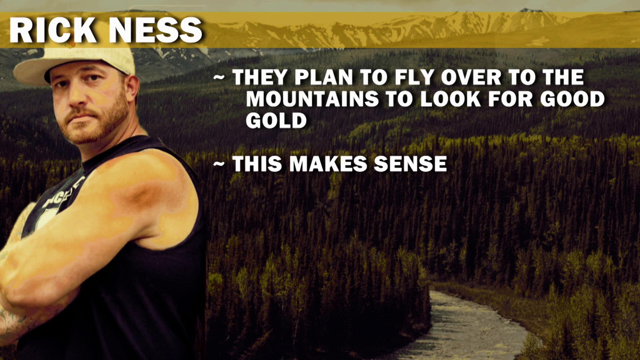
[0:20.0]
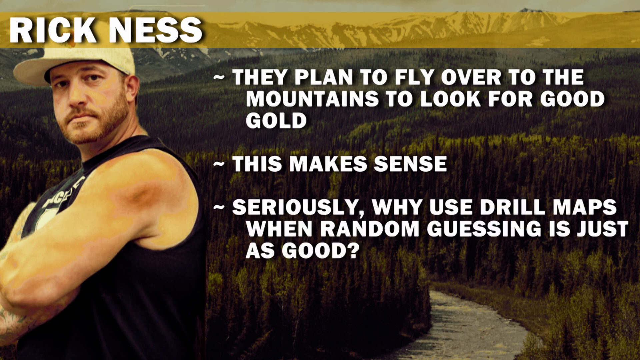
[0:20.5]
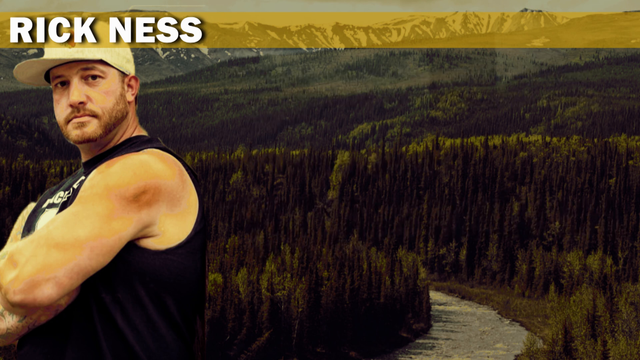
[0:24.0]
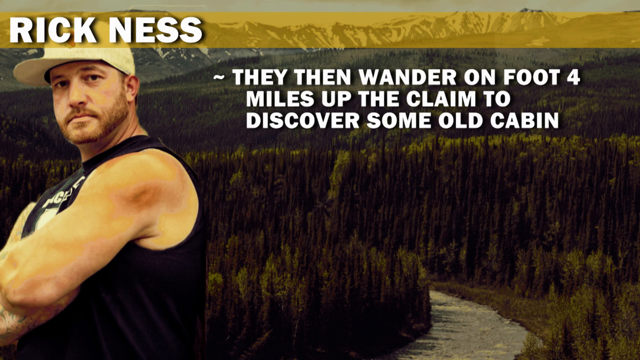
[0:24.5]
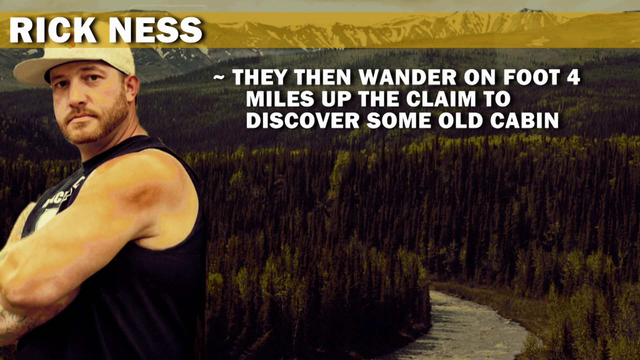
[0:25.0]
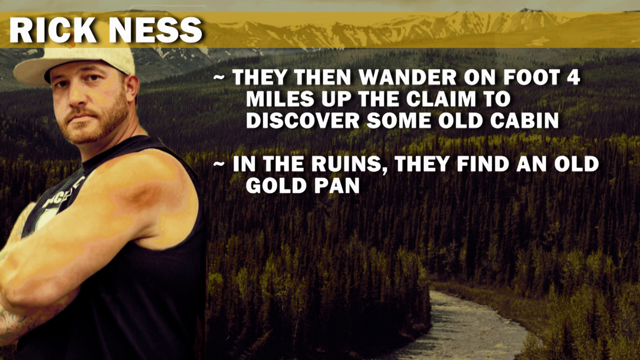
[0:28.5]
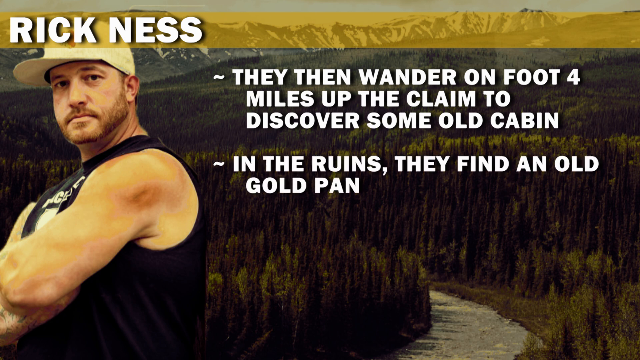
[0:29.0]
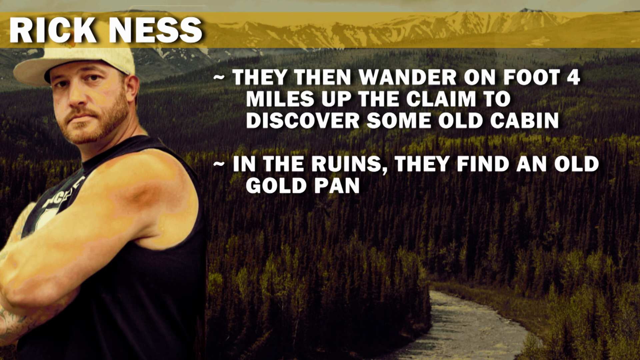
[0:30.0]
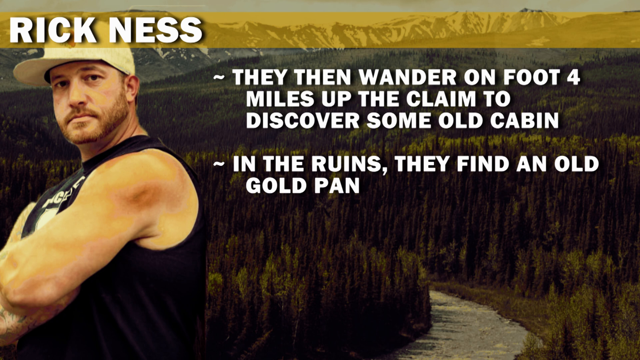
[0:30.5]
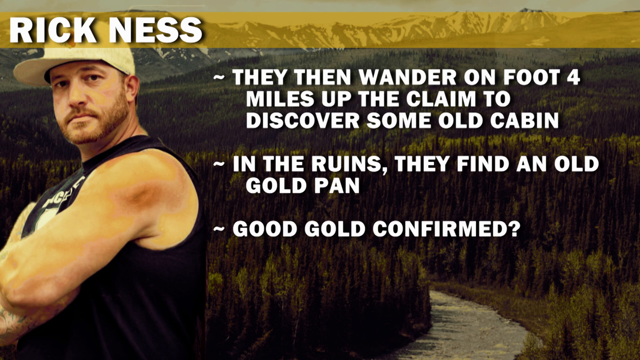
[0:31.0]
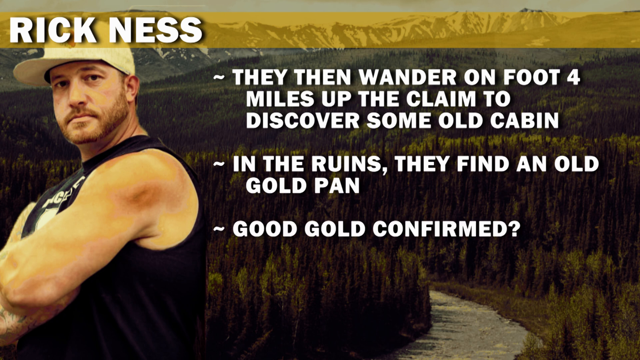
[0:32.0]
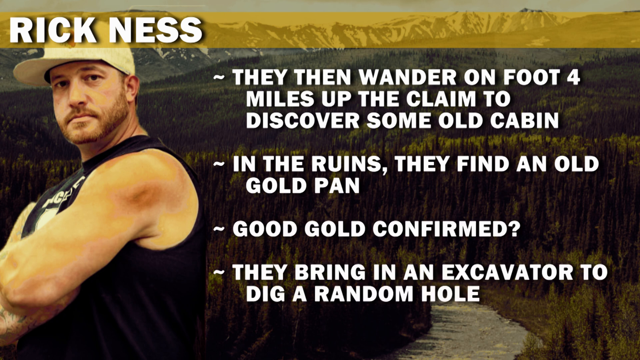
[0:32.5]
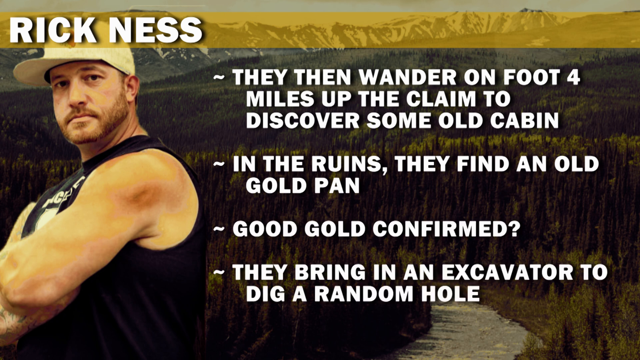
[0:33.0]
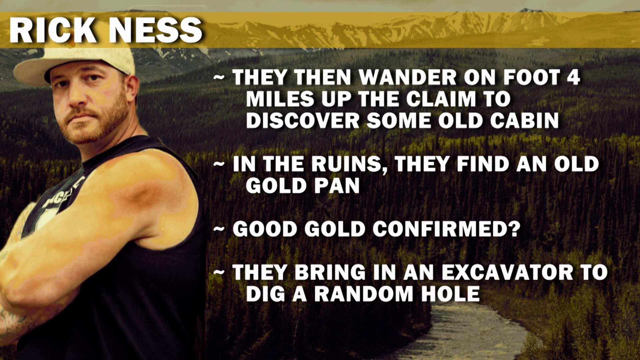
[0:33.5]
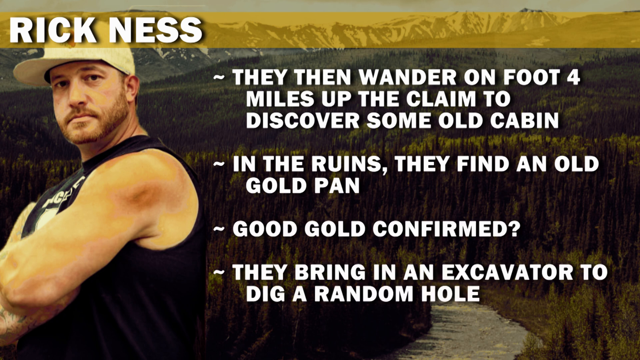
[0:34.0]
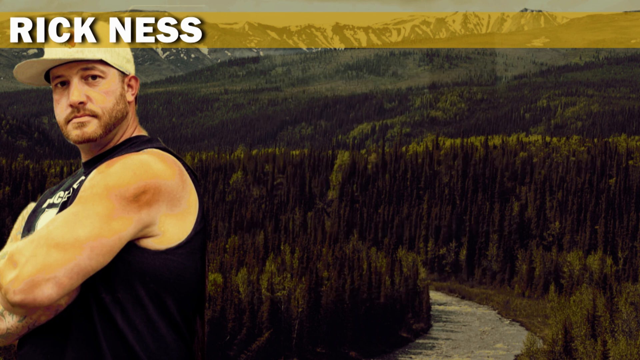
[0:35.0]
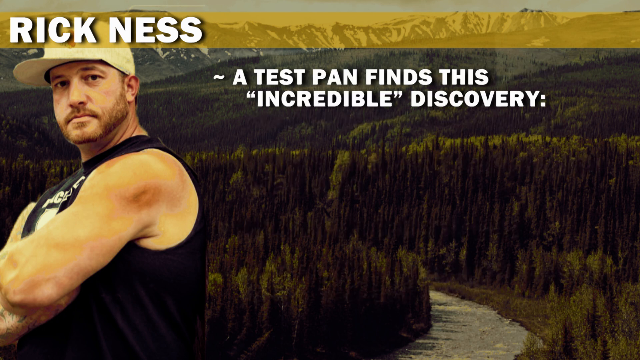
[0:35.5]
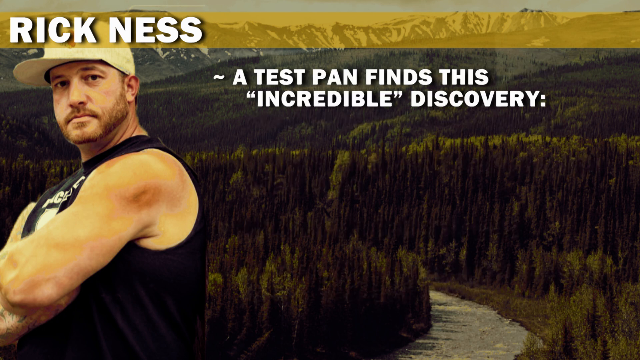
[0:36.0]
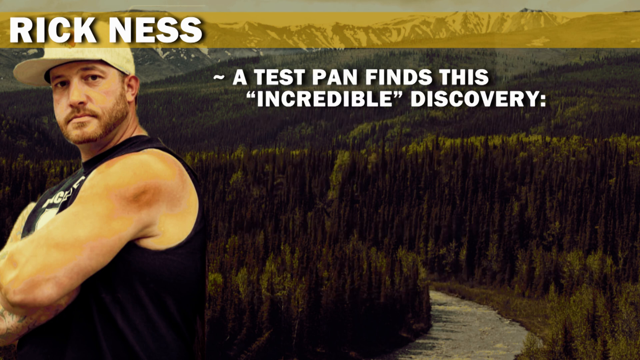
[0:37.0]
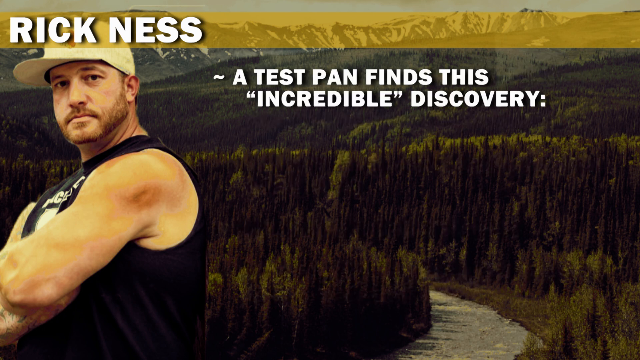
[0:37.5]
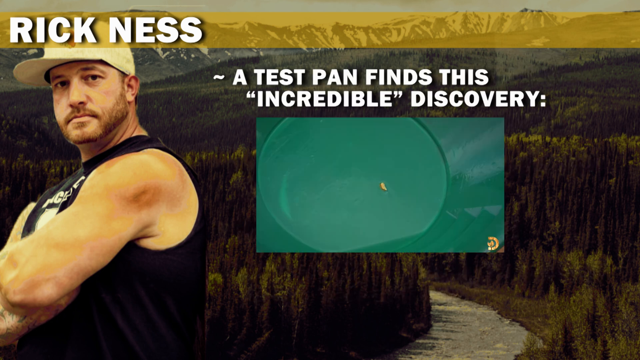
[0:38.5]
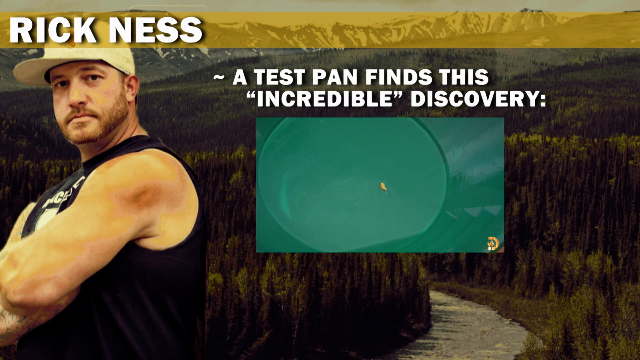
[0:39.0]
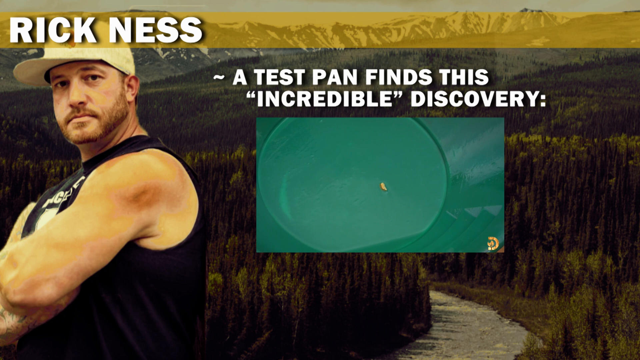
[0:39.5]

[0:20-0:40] The slide's background image shows a kind of forest with a path carving through it and snow-covered mountains in the distance. On the left-hand side is an image of a man in a black muscle vest, his shoulders and arms showing. He has a very tidy beard and a lemon-coloured baseball cap, his arms are folded in front of him, he looks towards the camera, and one shoulder is turned to the viewer. On the right-hand side, white capital-letter text appears with a kind of squiggly line as a bullet point, reading "they plan to fly over to the mountains to look for good gold." The bullet point beneath reads "this makes sense." Another appears underneath reading "seriously why use drill maps when random guessing is just as good". All of the text disappears and new bullet points begin: "they then wander on foot for miles up the claim to discover some old cabin.", then "in the ruins, they find an old gold pan.", then "good gold confirmed.", and then "they bring in an excavator to dig a random hole." That text disappears and a new bullet point reads "a test pan finds this incredible discovery." An image then shows the inside of what is apparently a green bucket with a tiny bit of gold in it.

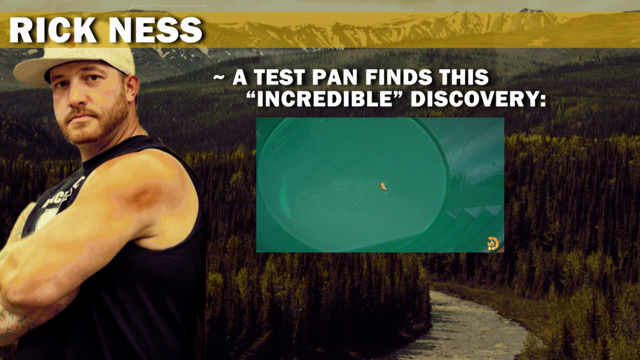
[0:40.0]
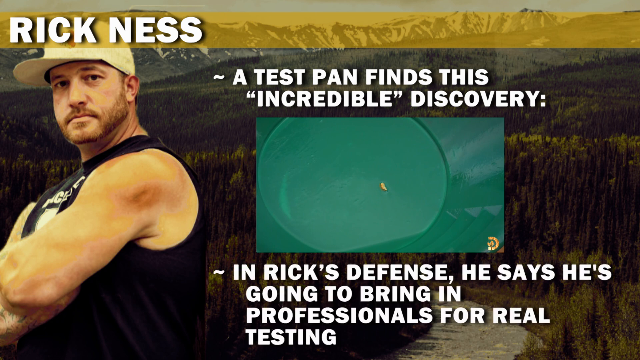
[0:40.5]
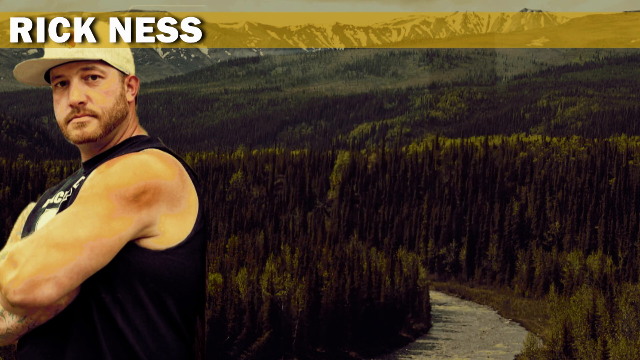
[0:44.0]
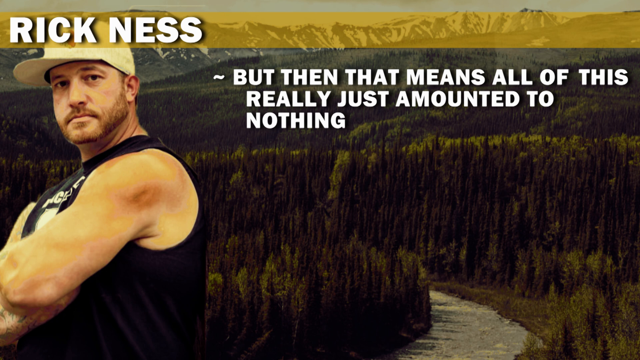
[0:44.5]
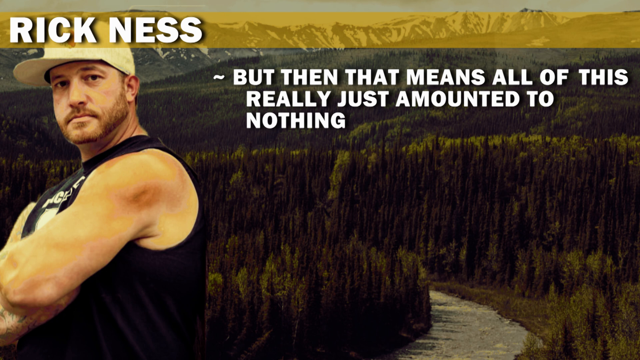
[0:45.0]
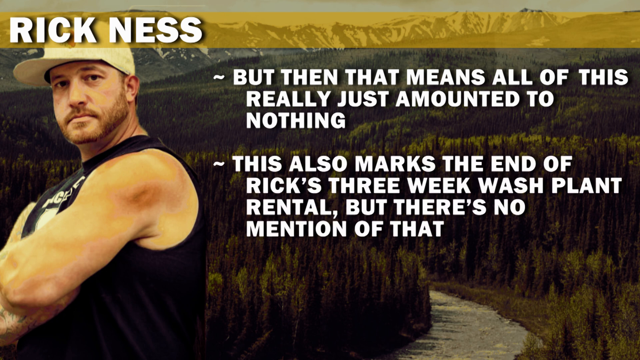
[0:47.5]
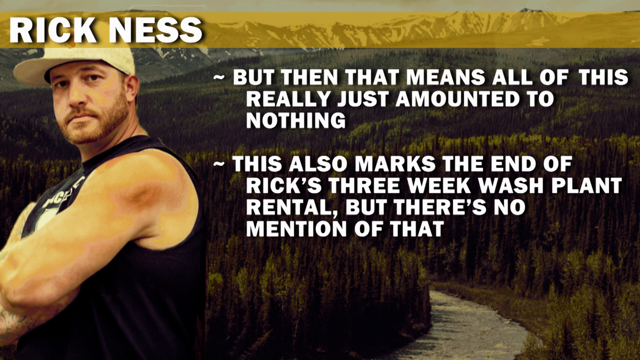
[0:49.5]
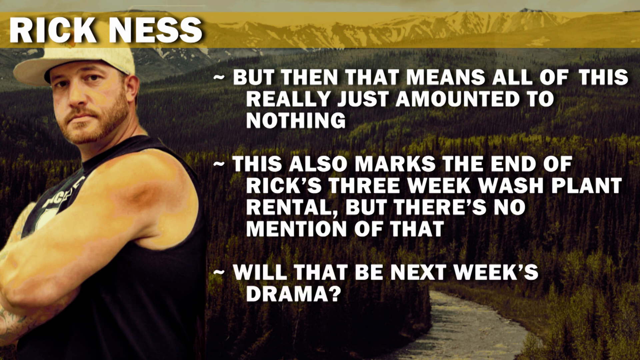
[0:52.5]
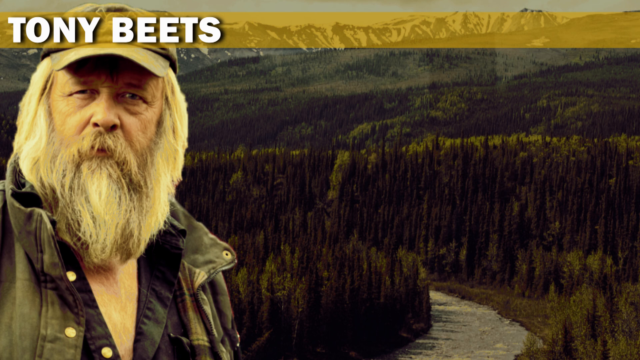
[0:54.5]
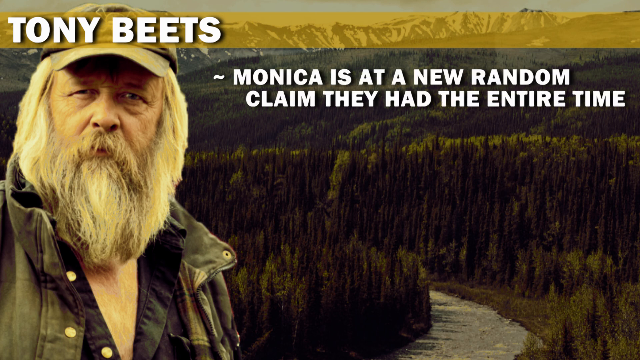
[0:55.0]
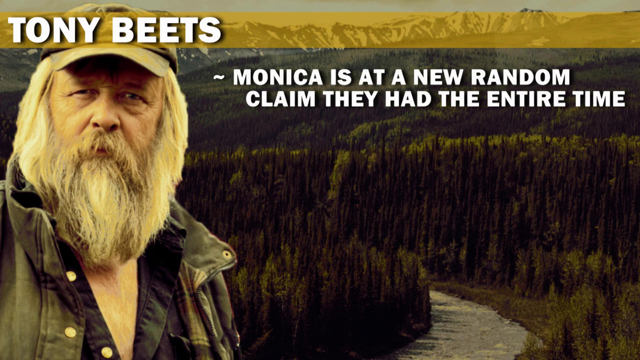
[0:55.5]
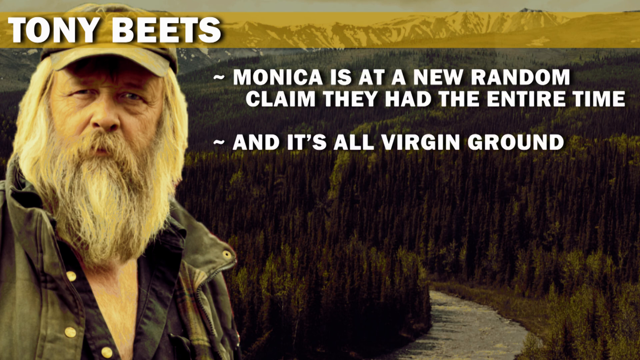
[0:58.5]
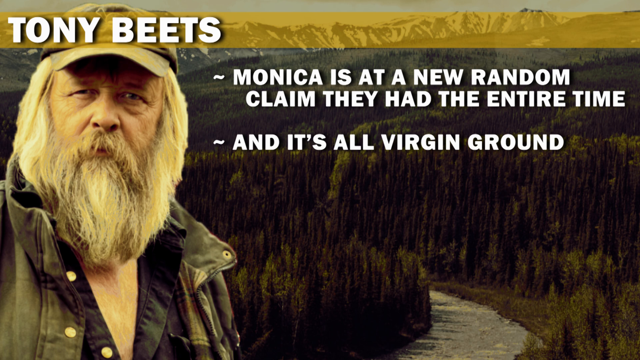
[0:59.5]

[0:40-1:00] The background shows a forest that looks quite vast, with a pathway winding through it and snowy mountains in the distance. In the top left-hand corner, white capital letters give the name "Rick Ness", and underneath is a photo of Rick Ness in his black vest t-shirt, arms folded, looking at the camera with a very serious face. On the right-hand side, a bullet point reads "a test pan finds this incredible discovery." Beneath it is an image of a green receptacle with what looks like a tiny bit of gold in the bottom of it, just one tiny bit. Under this, another bullet point reads "in Rick's defence, he says he's going to bring in professionals for real testing." The text and the image of the green receptacle disappear, and a new bullet point reads "but then that means all of this really just amounted for nothing." The next reads "this also marks the end of Rick's three-week wash plant rental but there's no mention of that." The next reads "will that be next week's drama?" The screen then changes: the forest and snowy mountain background remains, but on the left-hand side the name now reads "Tony Beets", above an image of Tony, an older man with a big white beard facing the camera. He wears a dark green cap and a matching coloured coat, with a black shirt open to show some of his chest hair. On the right-hand side, a bullet point reads "Monica is at a new random claim they have the entire time." The next reads "and it's all virgin ground", and the next reads "well, except for all the parts completely dredged out decades ago."